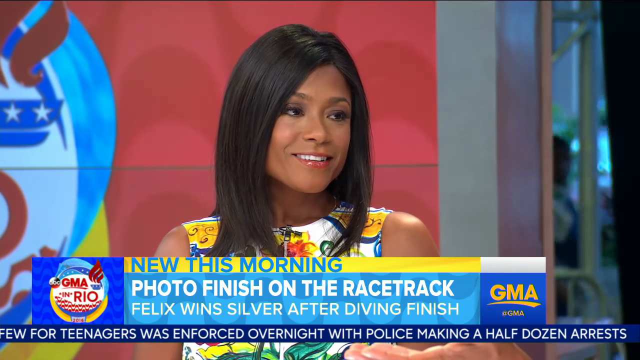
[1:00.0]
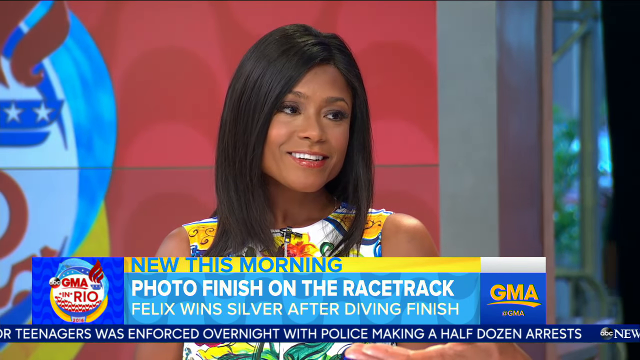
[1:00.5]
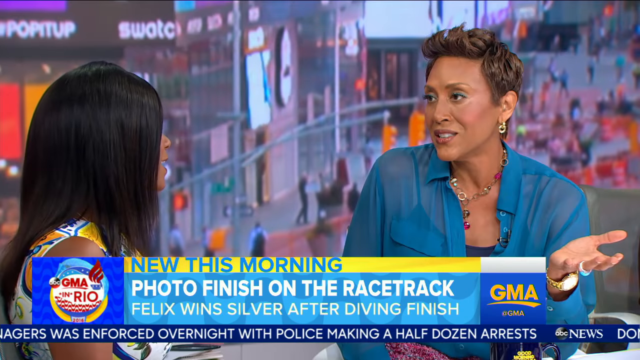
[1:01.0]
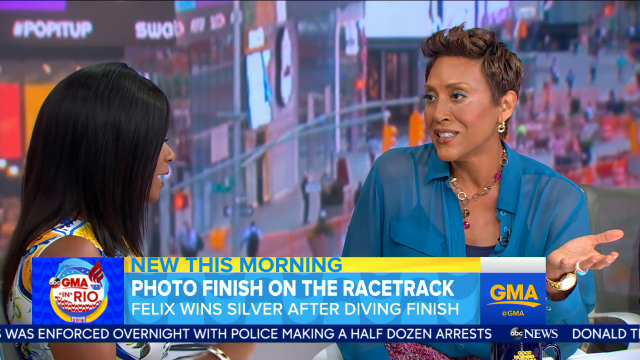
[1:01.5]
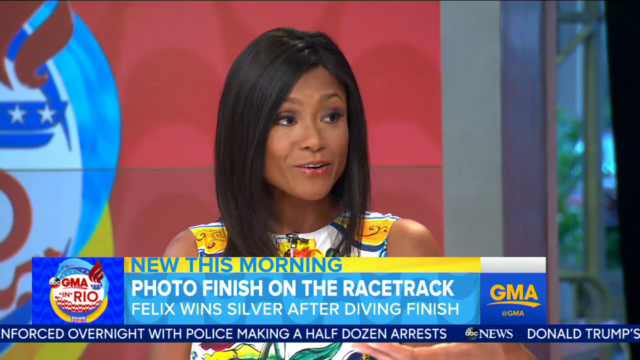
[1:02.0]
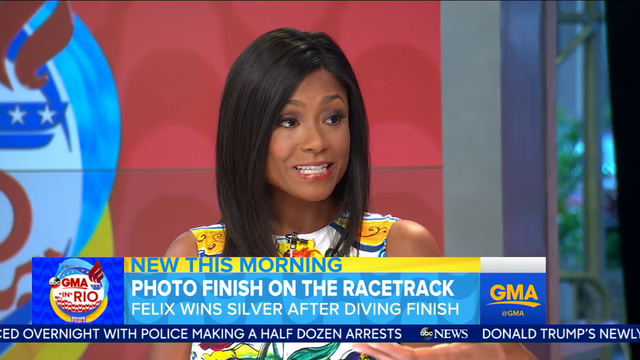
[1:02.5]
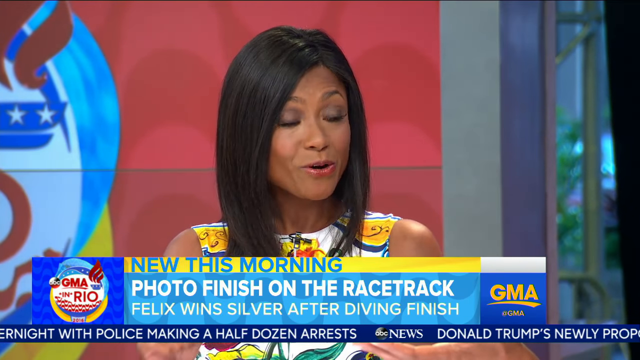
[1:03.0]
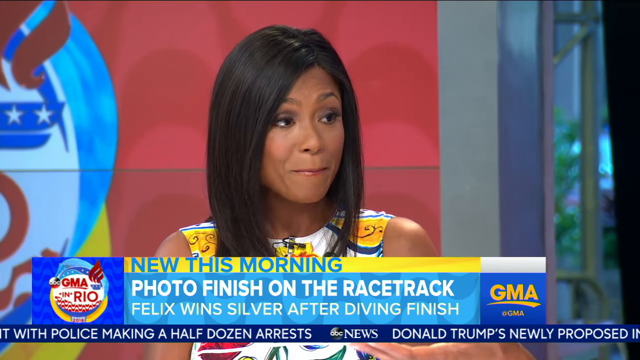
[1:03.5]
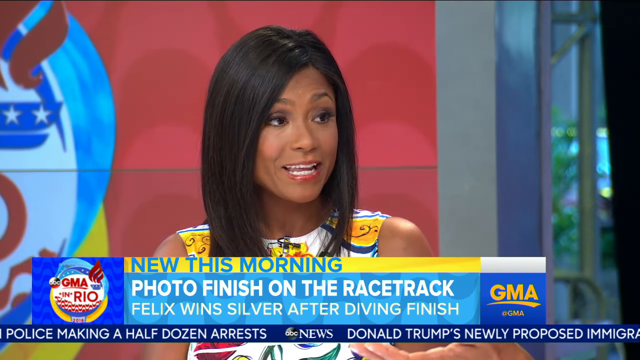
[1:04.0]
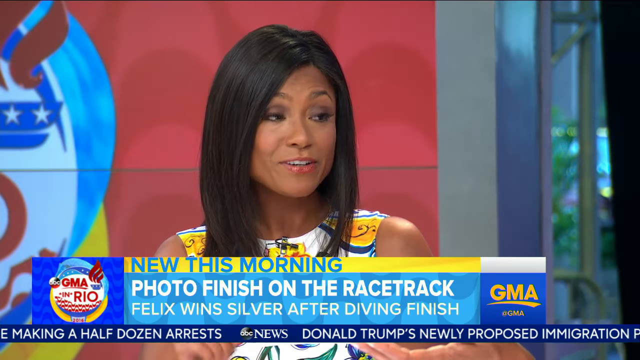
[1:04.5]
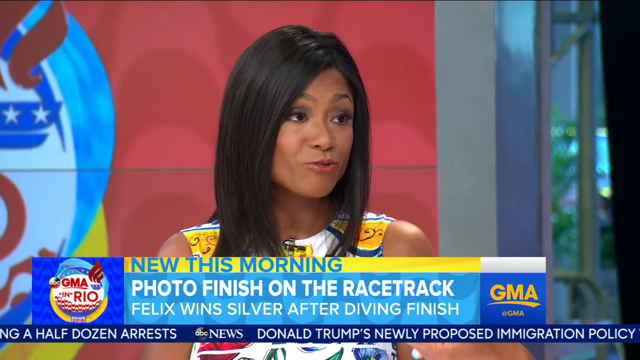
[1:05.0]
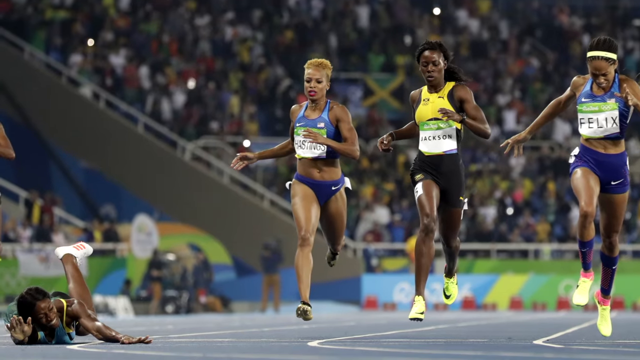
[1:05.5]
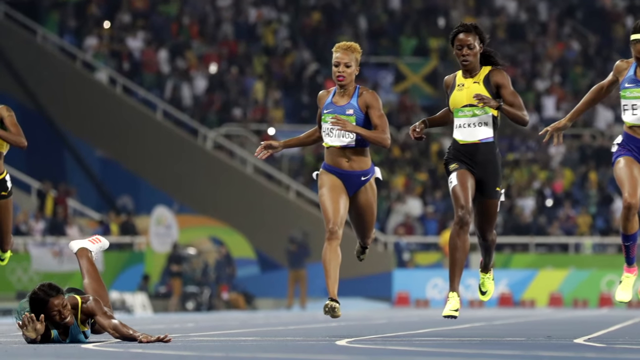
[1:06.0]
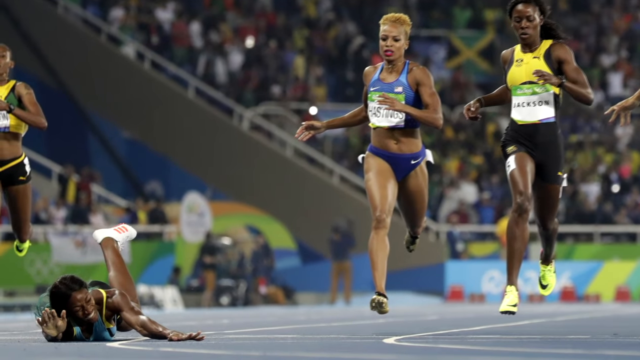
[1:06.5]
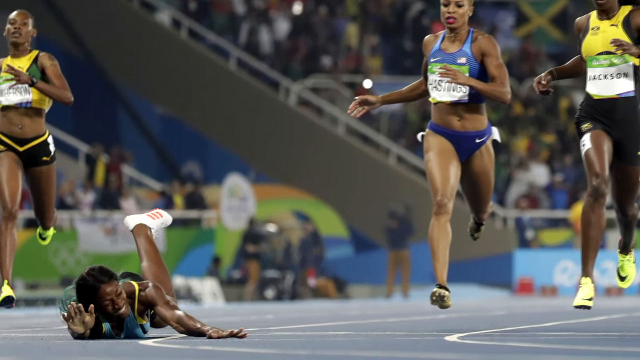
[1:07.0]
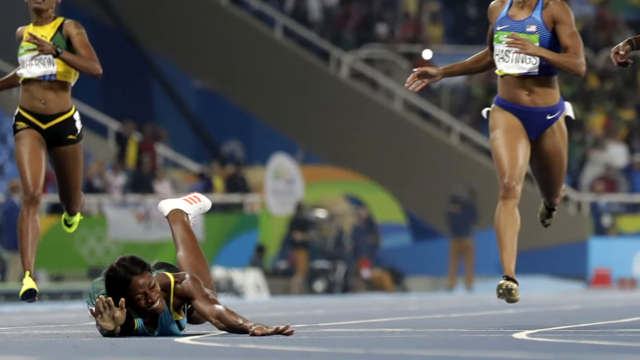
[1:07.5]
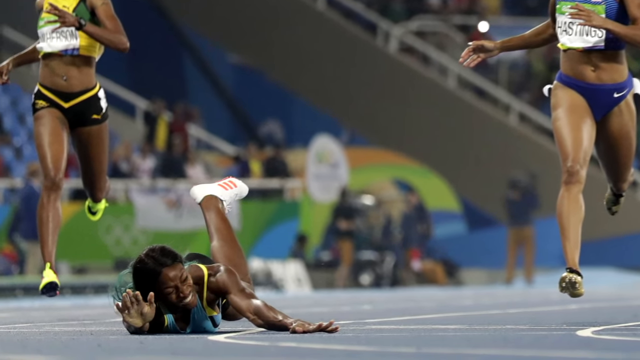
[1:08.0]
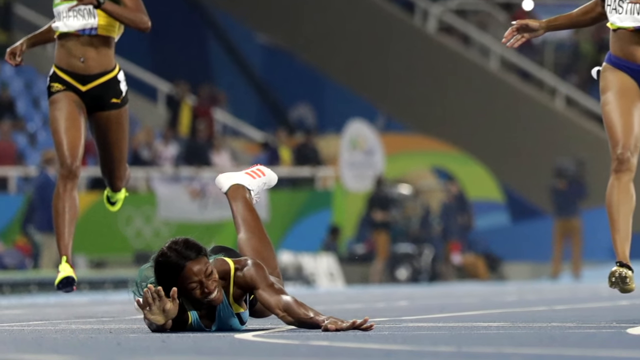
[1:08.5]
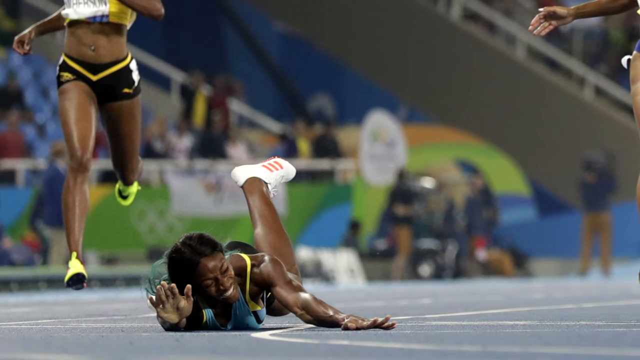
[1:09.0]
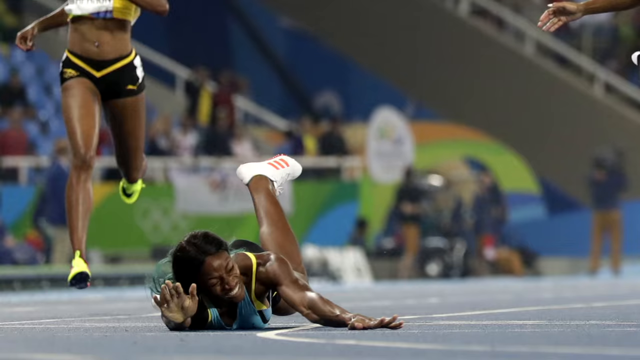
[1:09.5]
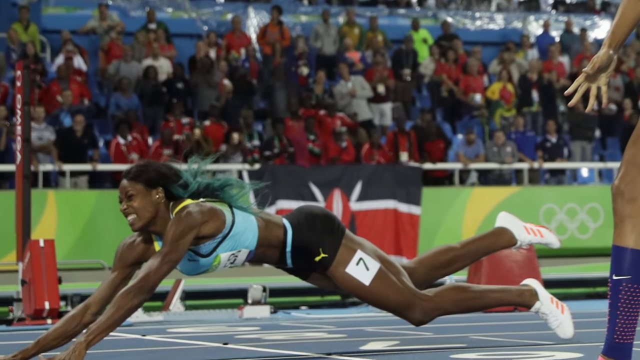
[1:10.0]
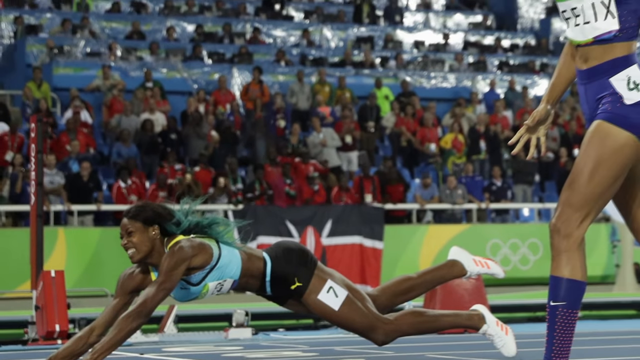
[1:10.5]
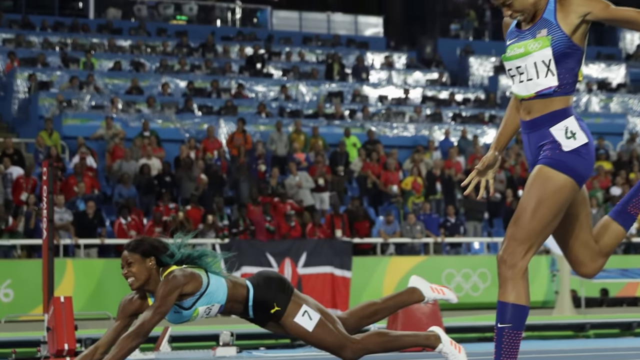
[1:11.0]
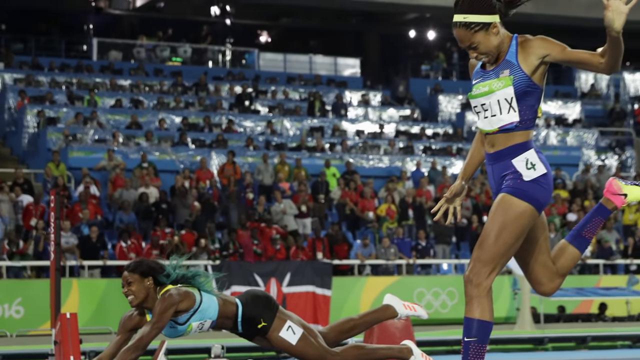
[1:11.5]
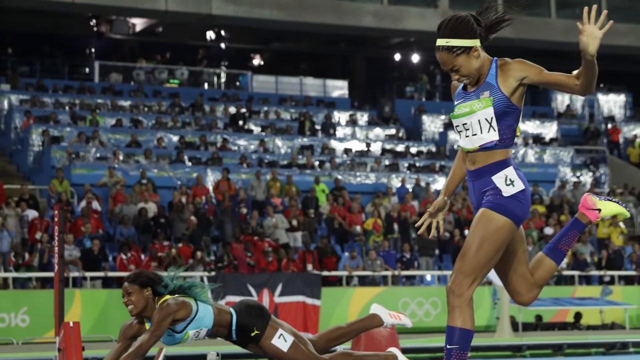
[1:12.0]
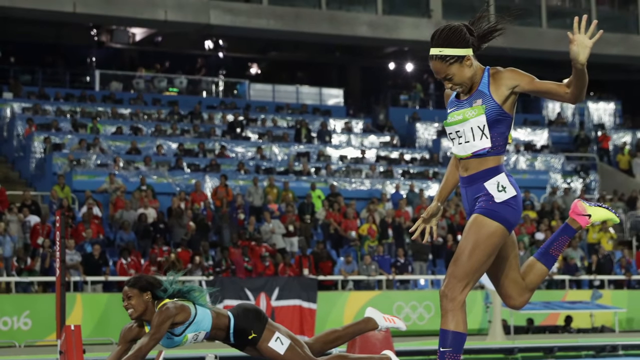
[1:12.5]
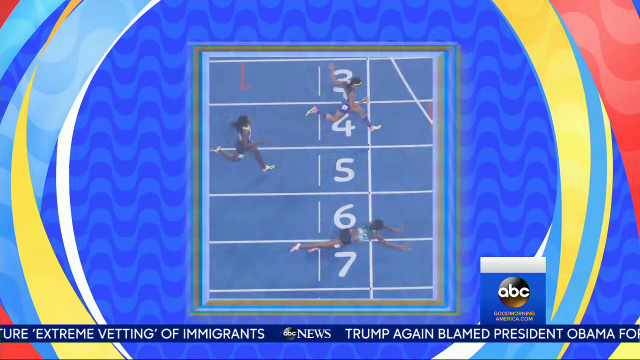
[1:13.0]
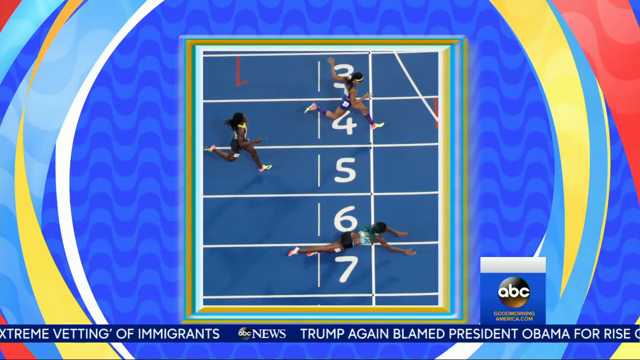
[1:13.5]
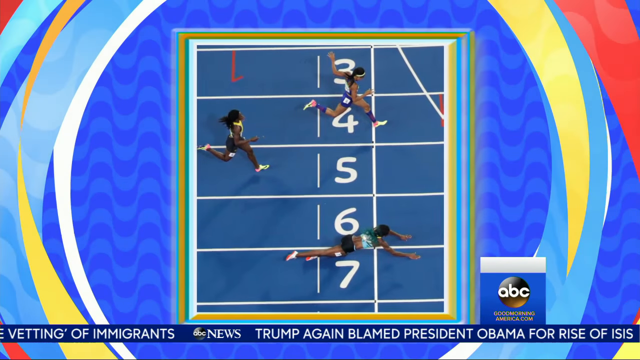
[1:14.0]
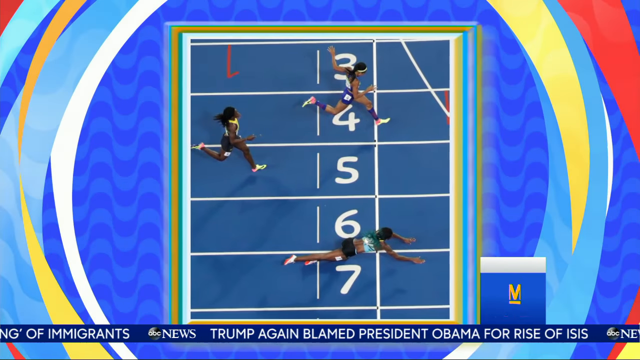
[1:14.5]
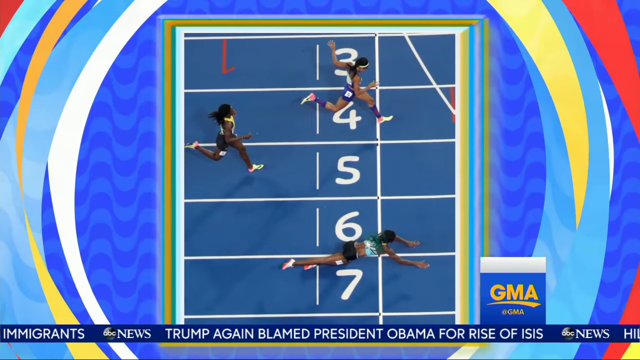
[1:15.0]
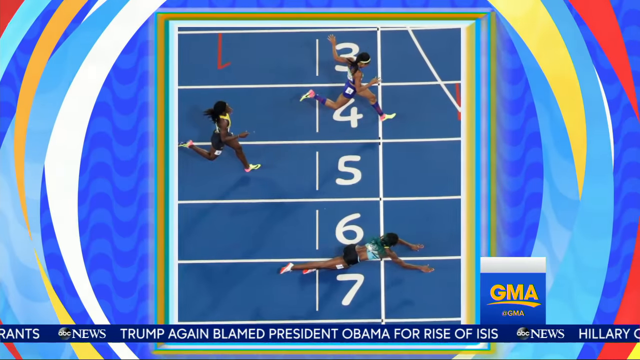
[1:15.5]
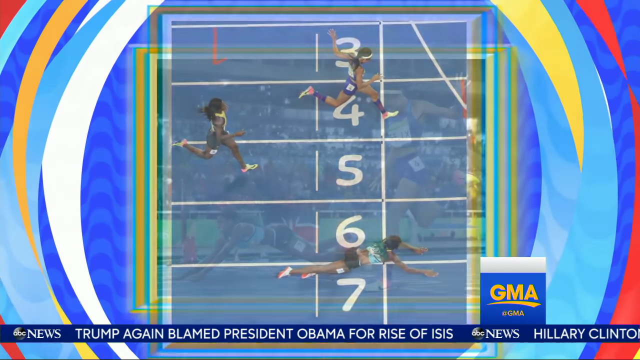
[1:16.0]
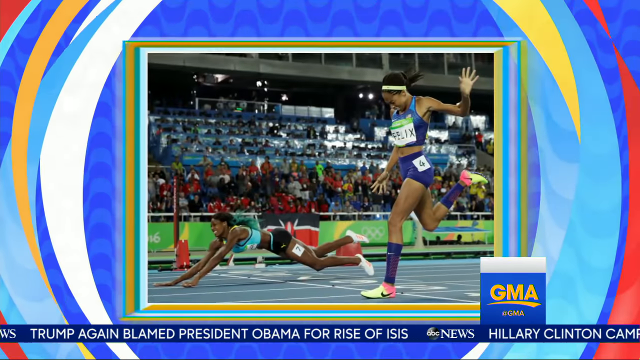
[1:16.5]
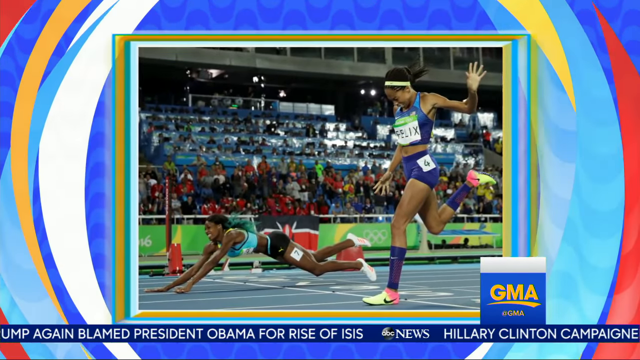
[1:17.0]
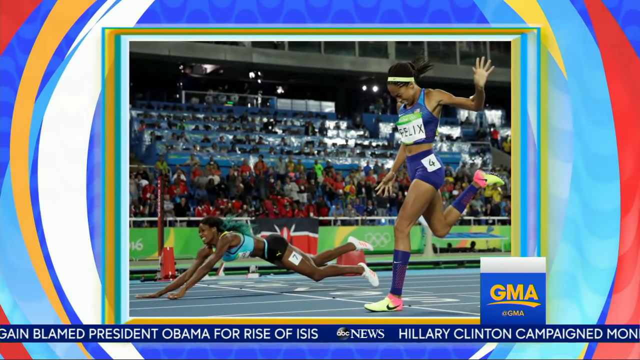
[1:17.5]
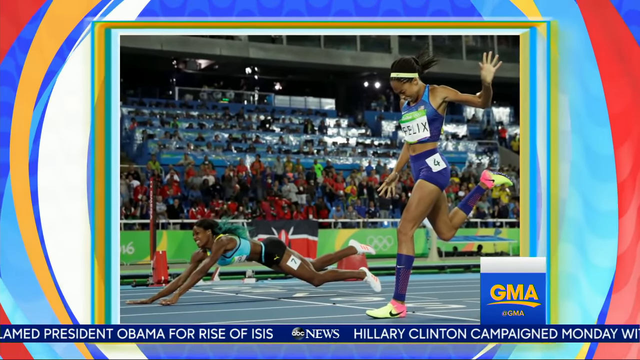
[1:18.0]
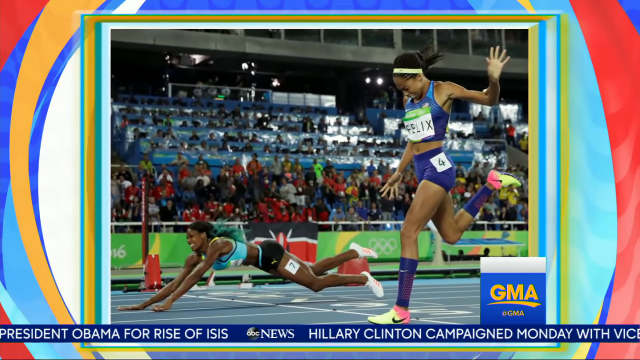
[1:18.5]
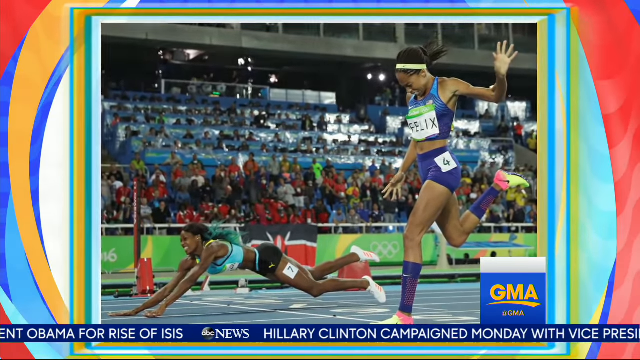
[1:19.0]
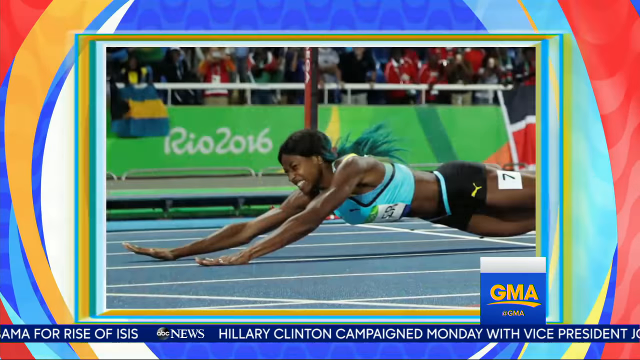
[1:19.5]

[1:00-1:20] Dominique Dawes is on screen with the text "news this morning photo finish on the racetrack Felix wins silver after diving finish." She talks with Robin Roberts, using her hands a lot. The video then shows track and field footage: a black woman falls as another woman tries to pass her right at the line. She falls at the line next to the other woman and wears a turquoise top, black tight shorts and white sneakers. It looks like a photo finish, apparently with an effort to determine who won, and three other athletes are in the distance behind them. A view from the top shows the photo finish as the woman falls; it looks very painful, and she has a pained look on her face as she falls onto the track. Three other women are to the right and one other woman to the left, looking about a second behind. It looks like the other woman crossed the line before the woman who fell, though nothing on screen says so. Then Robin Roberts is shown talking to the other woman again.